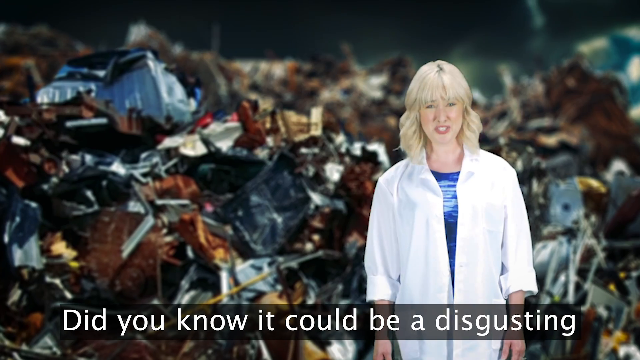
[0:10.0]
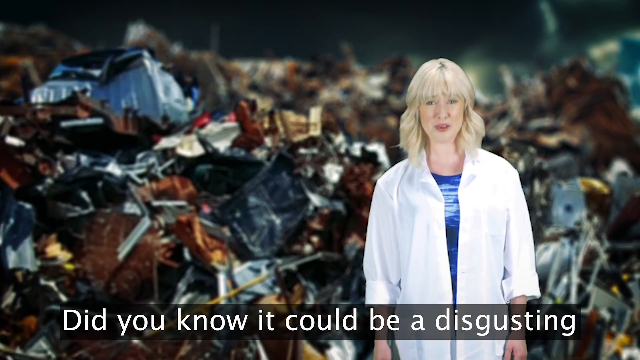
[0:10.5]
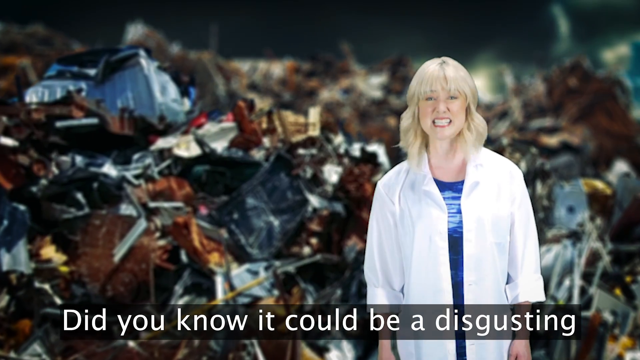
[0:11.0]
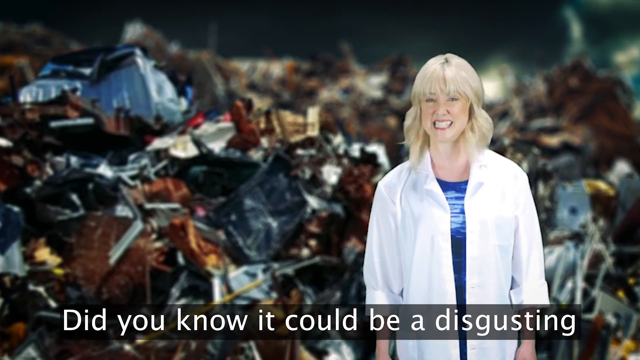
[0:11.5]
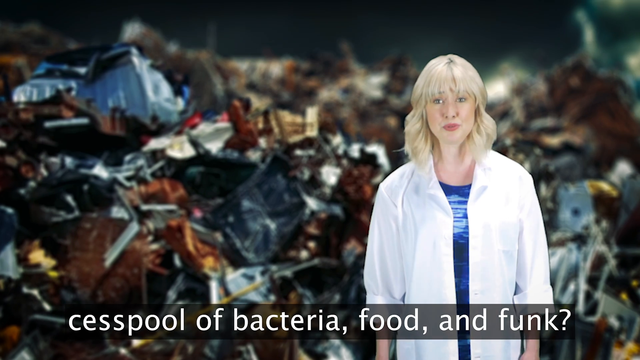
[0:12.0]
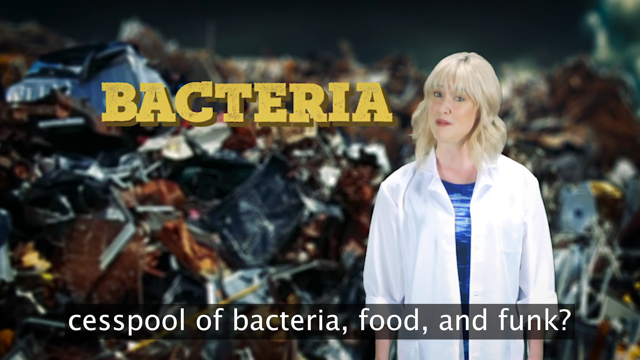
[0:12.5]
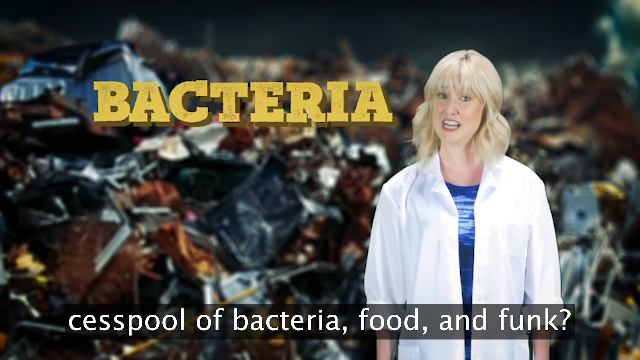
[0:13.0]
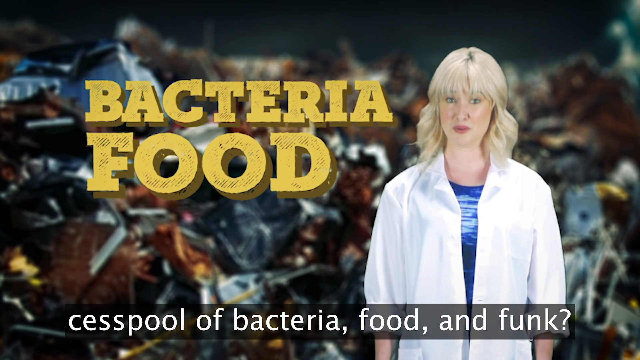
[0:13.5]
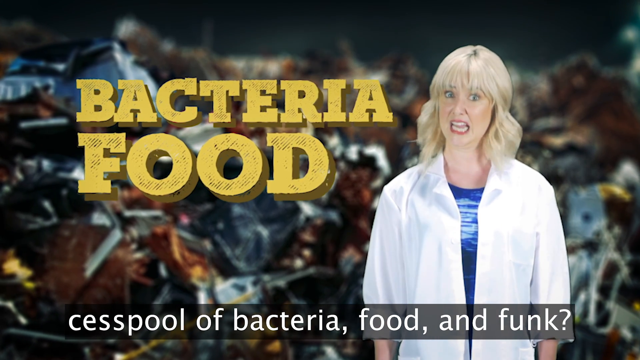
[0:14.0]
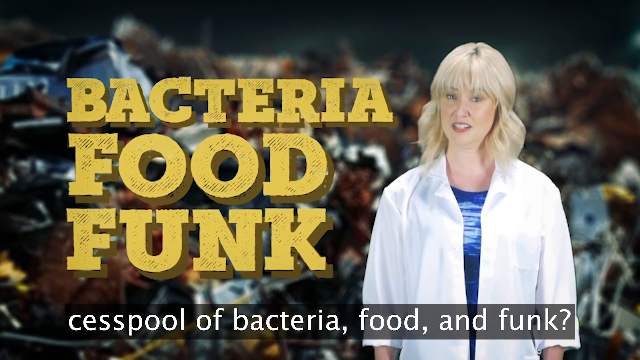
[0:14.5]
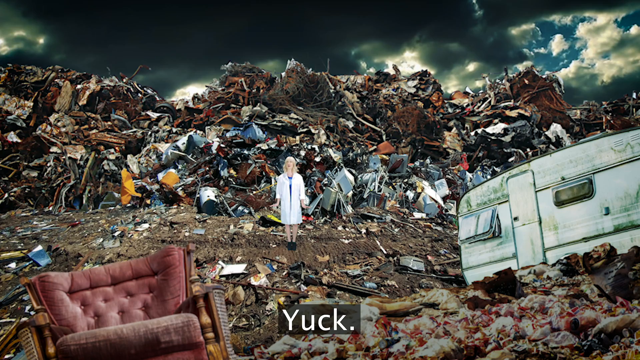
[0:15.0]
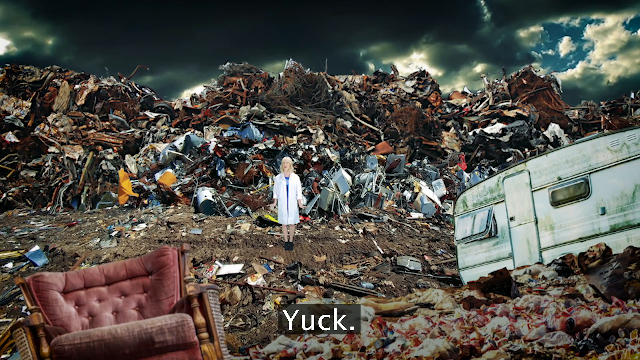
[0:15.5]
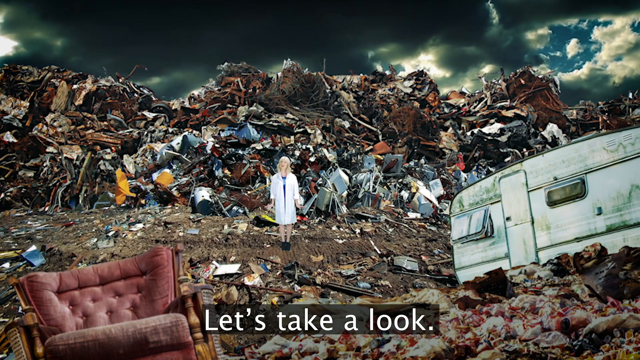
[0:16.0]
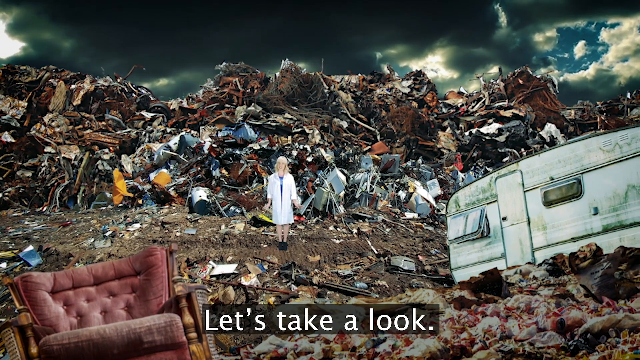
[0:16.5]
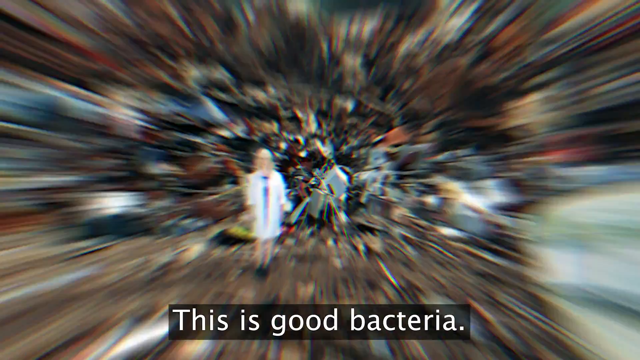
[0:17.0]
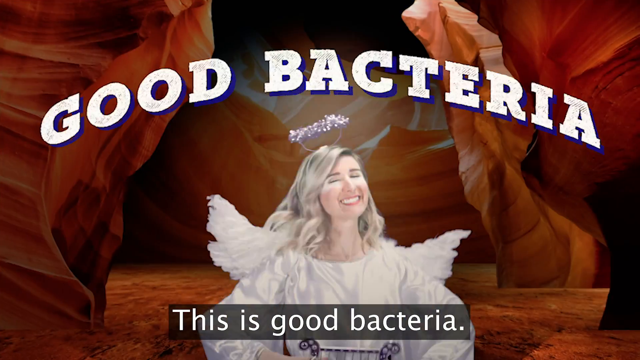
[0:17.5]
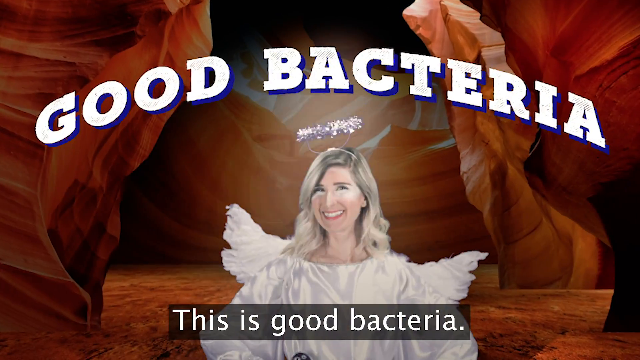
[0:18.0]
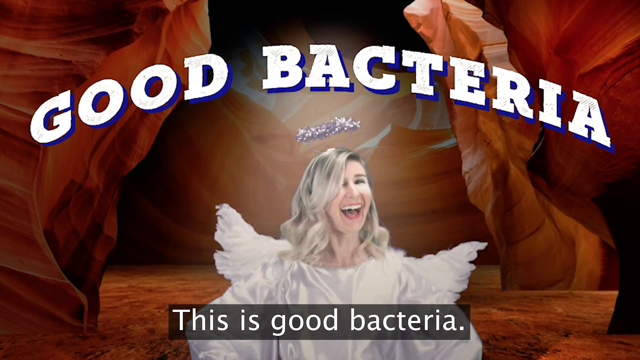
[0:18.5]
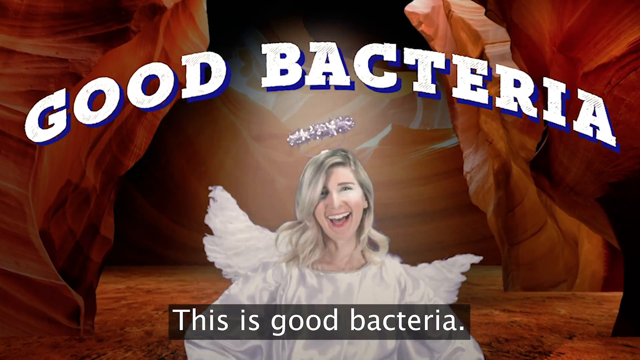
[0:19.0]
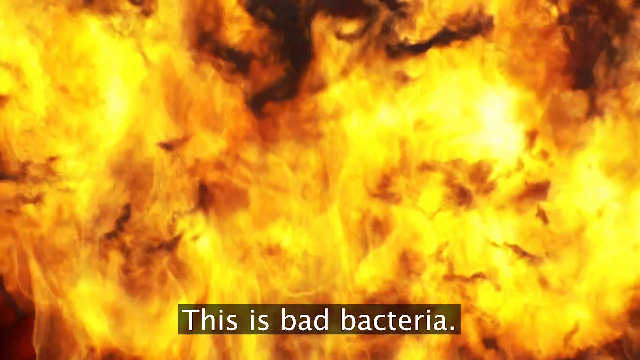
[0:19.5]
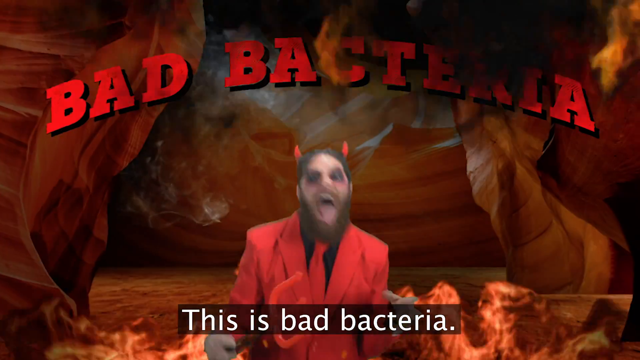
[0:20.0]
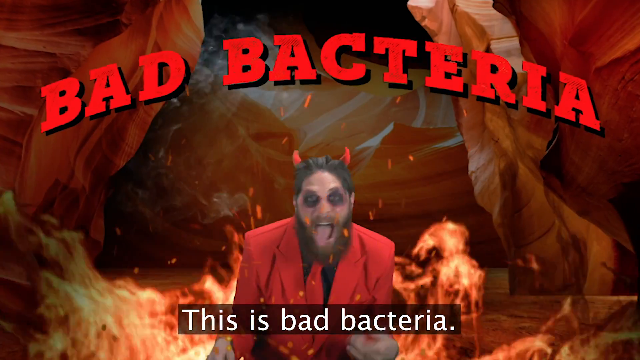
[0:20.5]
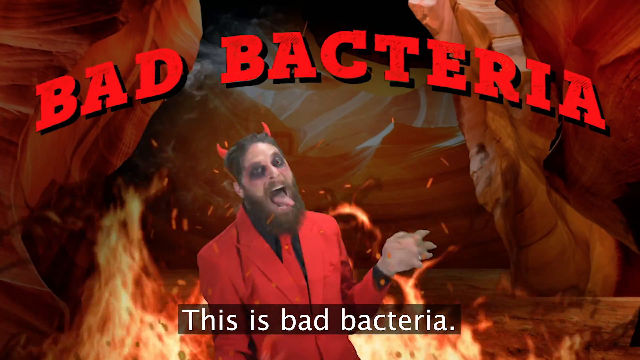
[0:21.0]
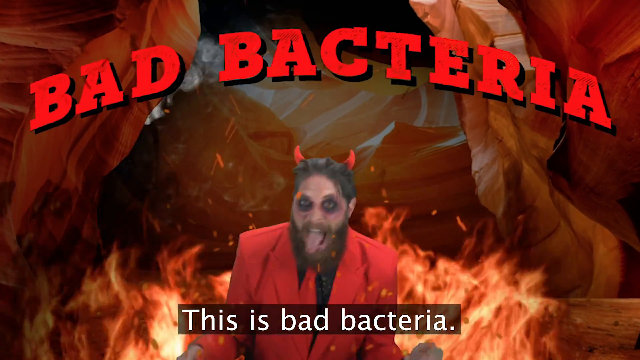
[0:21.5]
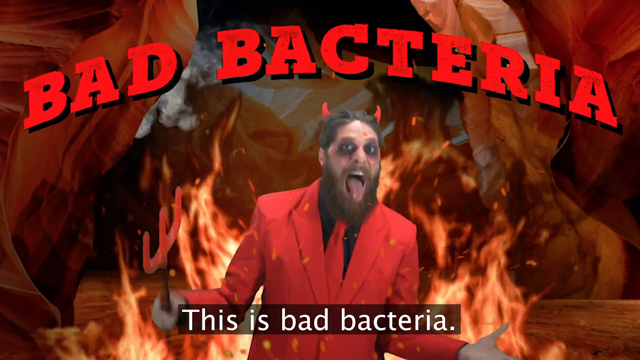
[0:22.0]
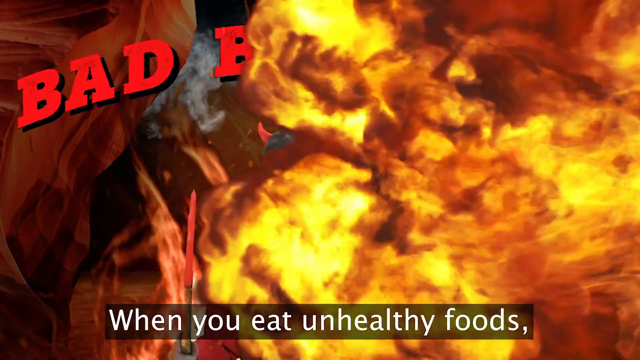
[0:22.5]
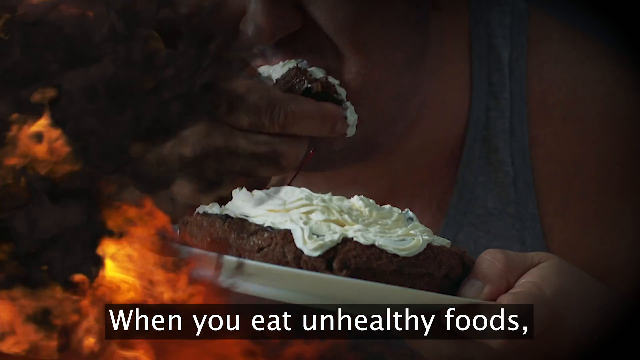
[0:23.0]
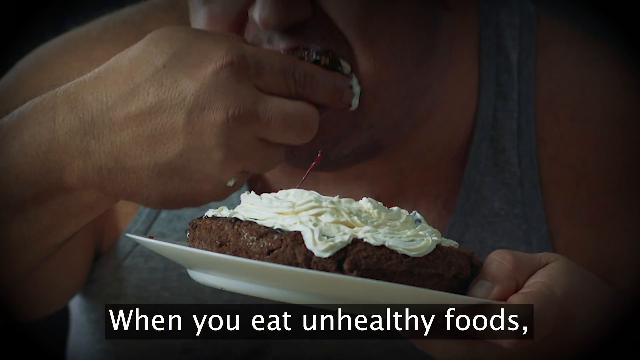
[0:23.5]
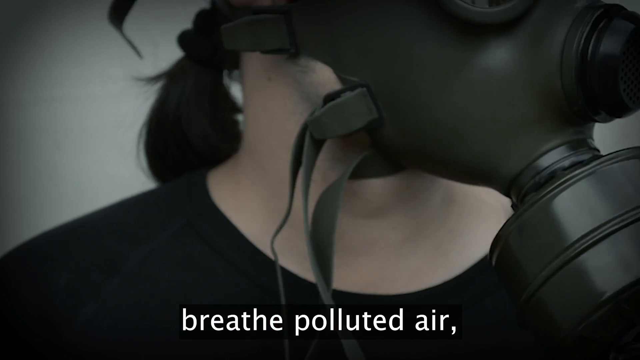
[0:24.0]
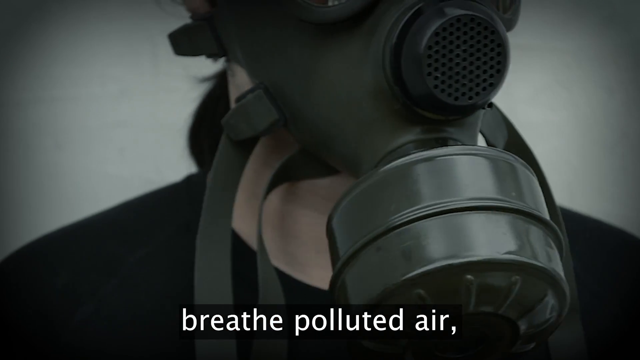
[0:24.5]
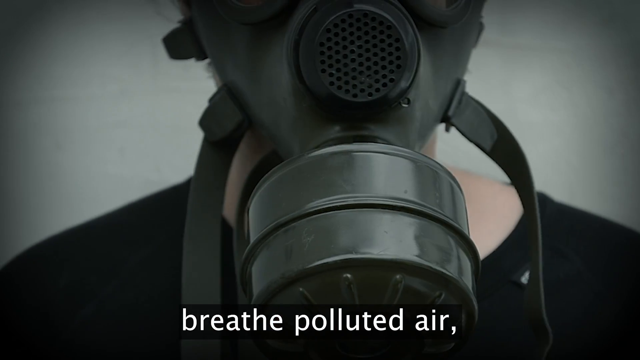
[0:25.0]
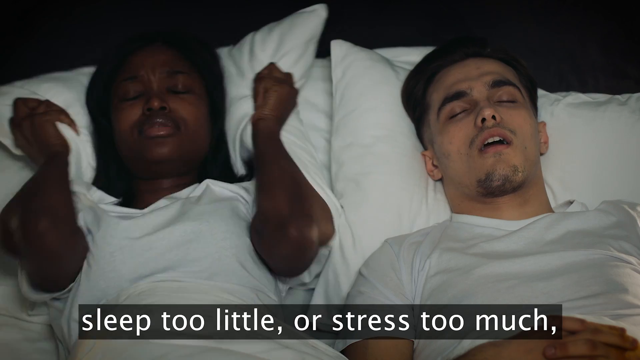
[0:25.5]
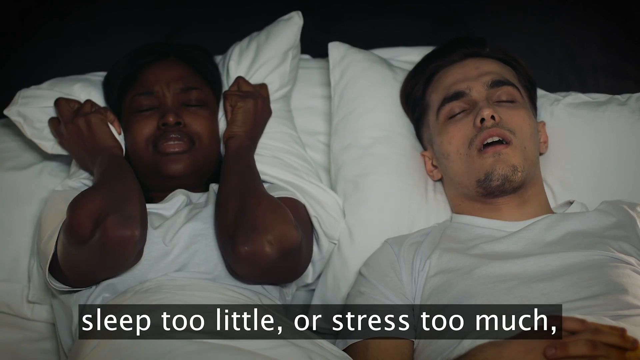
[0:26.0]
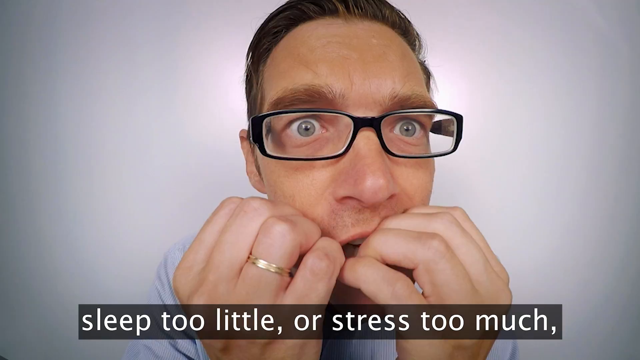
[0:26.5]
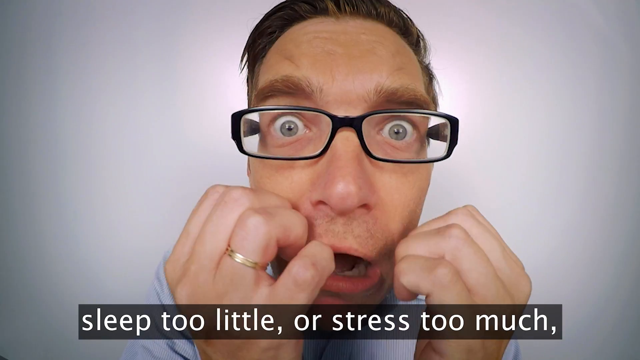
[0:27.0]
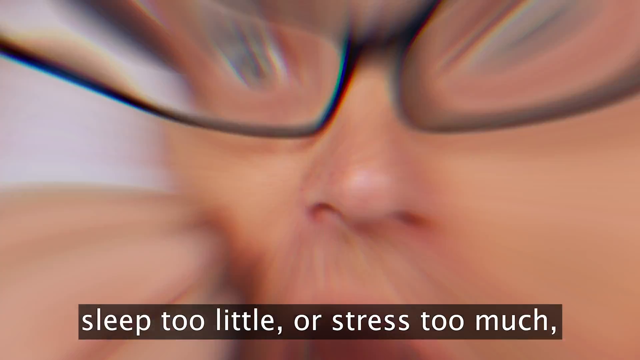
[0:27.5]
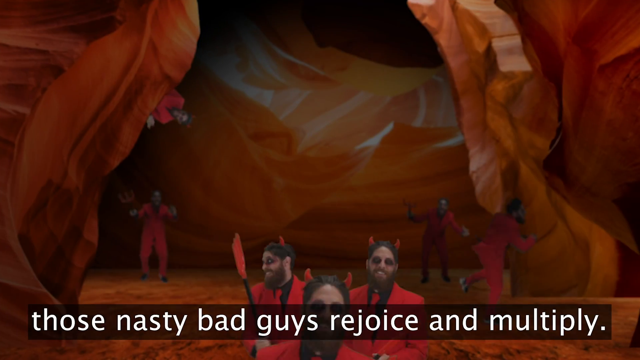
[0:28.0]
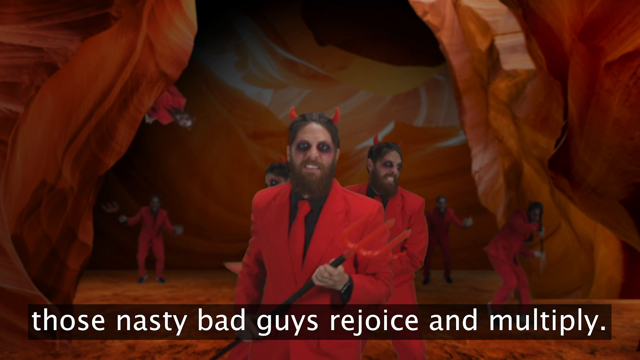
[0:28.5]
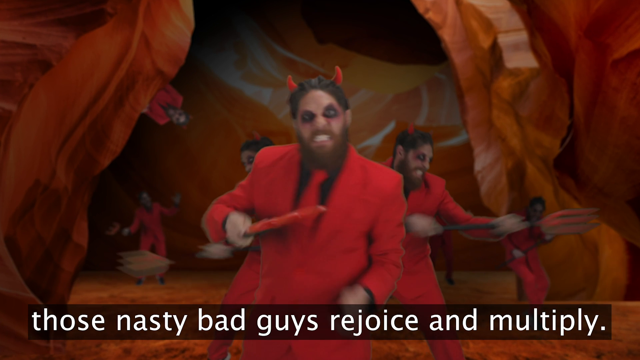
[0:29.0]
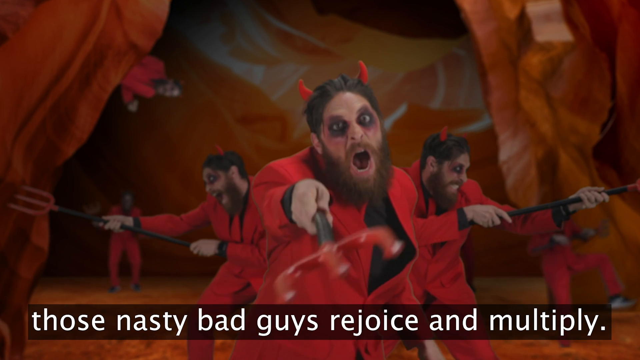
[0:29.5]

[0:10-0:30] The blonde woman, wearing a blue shirt and a white lab coat, stands in what appears to be a garbage dump, with text at the bottom reading "did you know it could be a disgusting cesspool of bacteria, food and funk?" The words "bacteria, food and funk" appear in yellow text at the front of the screen. A wide view of the garbage dump follows, with a travel trailer on the right and a burgundy couch on the left, and text reading "yuck, let's take a look, this is good bacteria." Next, the woman appears in a winged outfit, labeled "good bacteria", standing in what appears to be a cave. Then a man in a red suit with horns, labeled "bad bacteria", screams with flames surrounding him. A woman in a gas mask and a black shirt follows, and then a Black woman and a white man in a bed, where she covers her ears with a pillow. The video returns to the man in the red suit and horns, who looks like the devil.